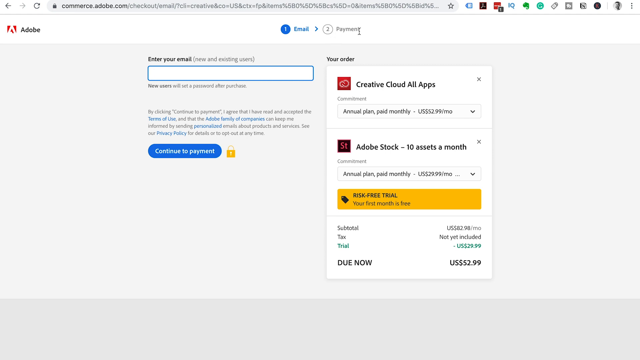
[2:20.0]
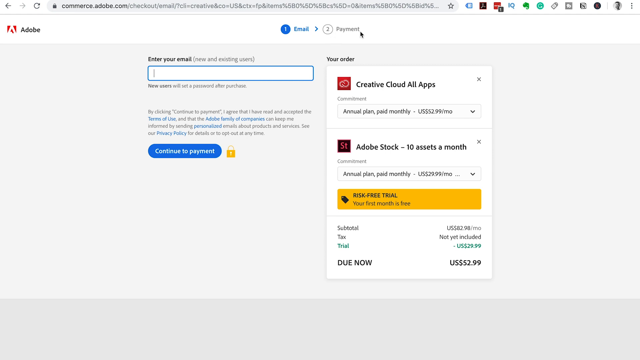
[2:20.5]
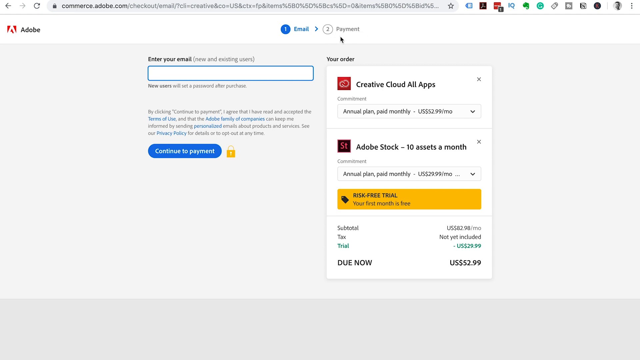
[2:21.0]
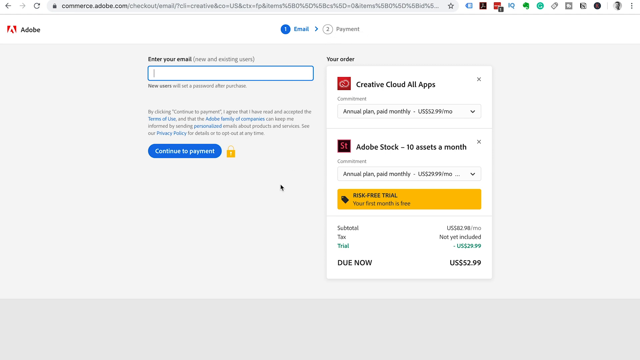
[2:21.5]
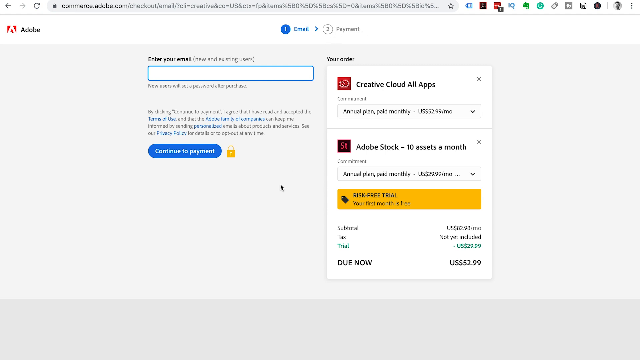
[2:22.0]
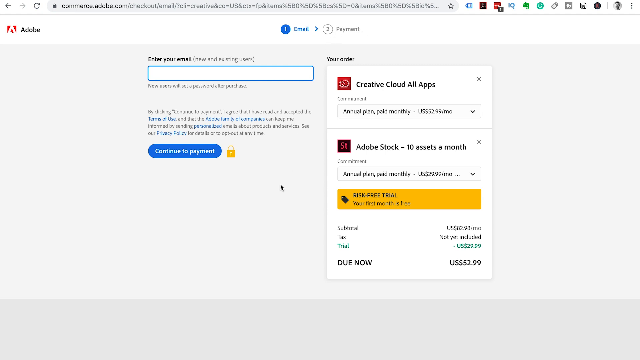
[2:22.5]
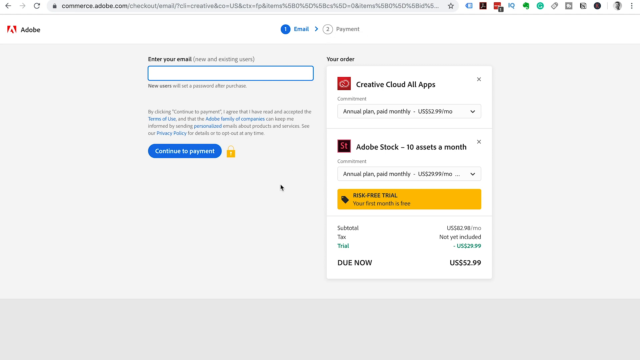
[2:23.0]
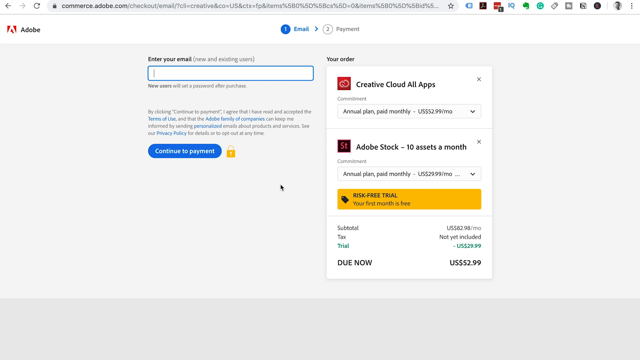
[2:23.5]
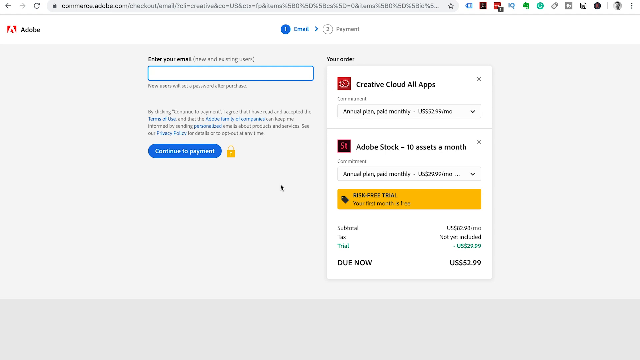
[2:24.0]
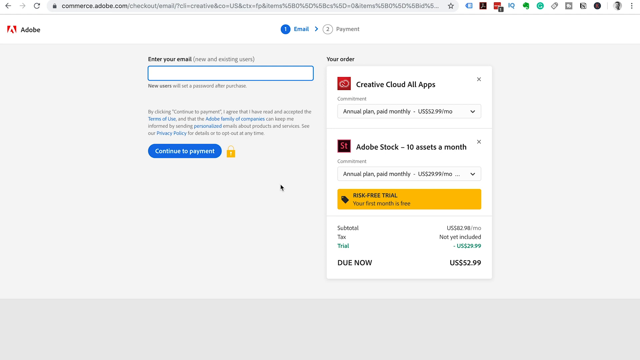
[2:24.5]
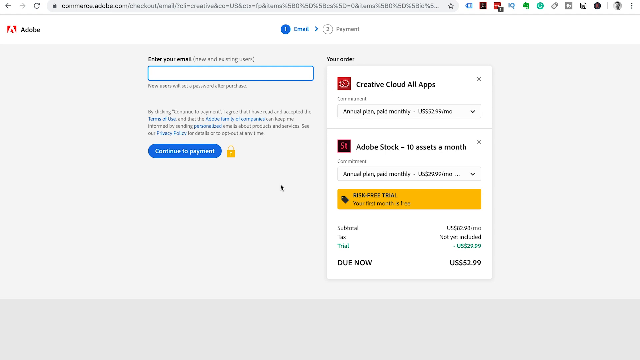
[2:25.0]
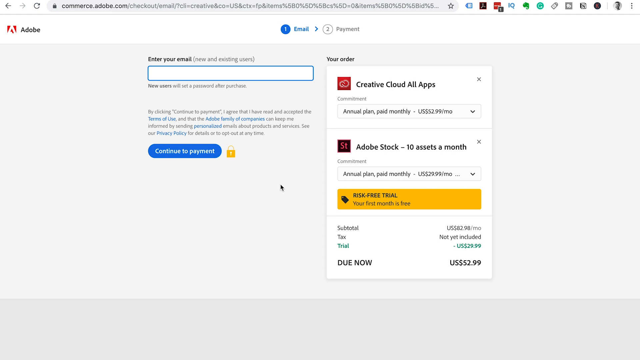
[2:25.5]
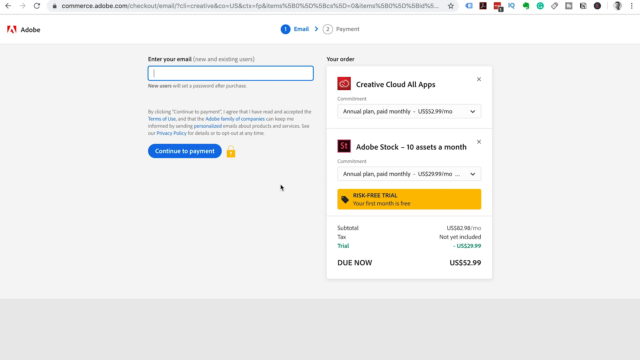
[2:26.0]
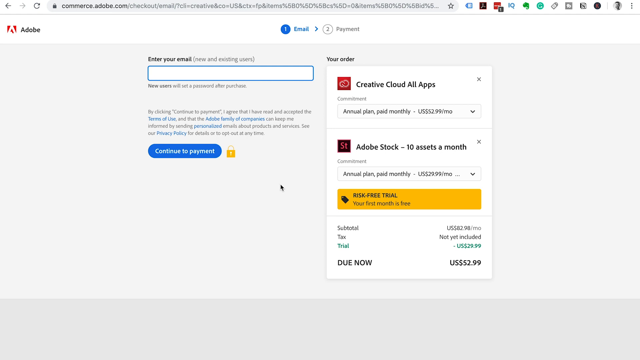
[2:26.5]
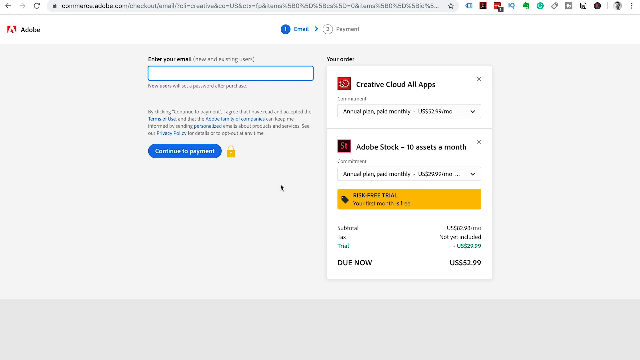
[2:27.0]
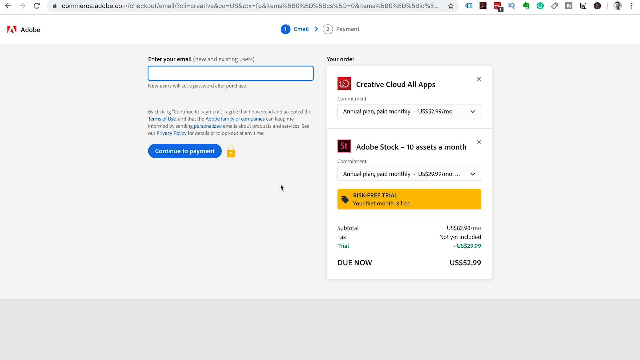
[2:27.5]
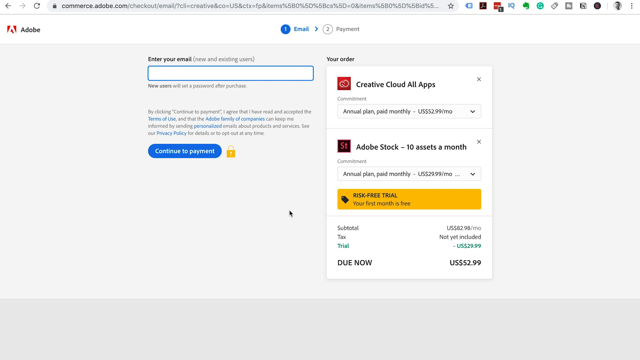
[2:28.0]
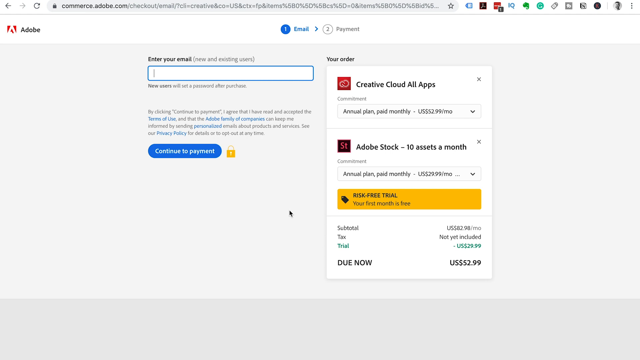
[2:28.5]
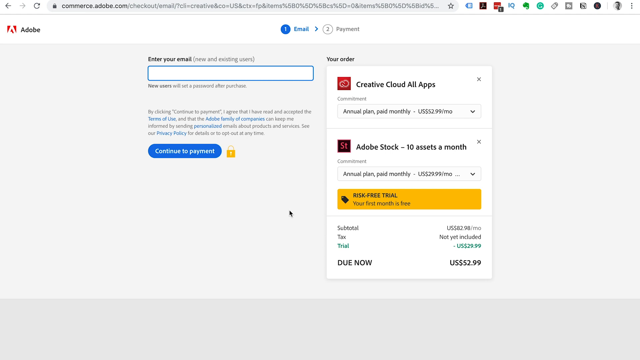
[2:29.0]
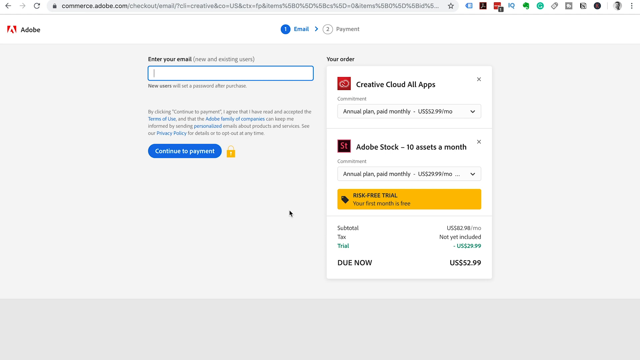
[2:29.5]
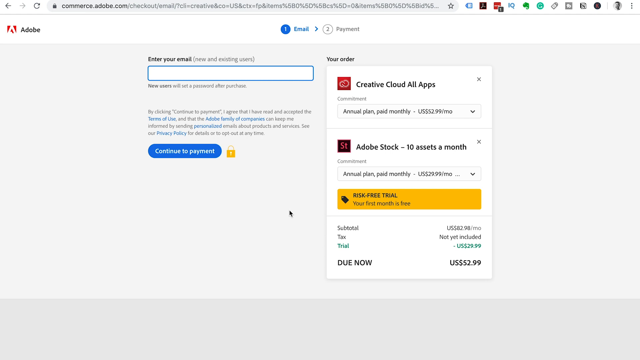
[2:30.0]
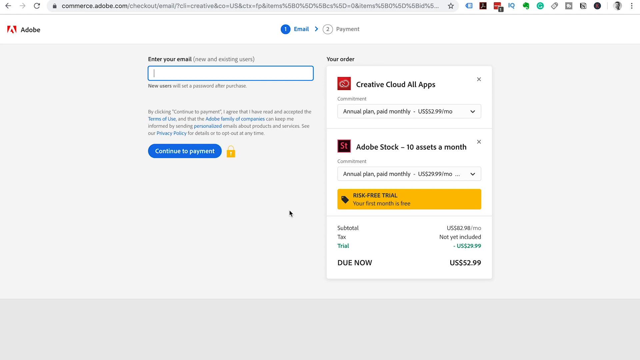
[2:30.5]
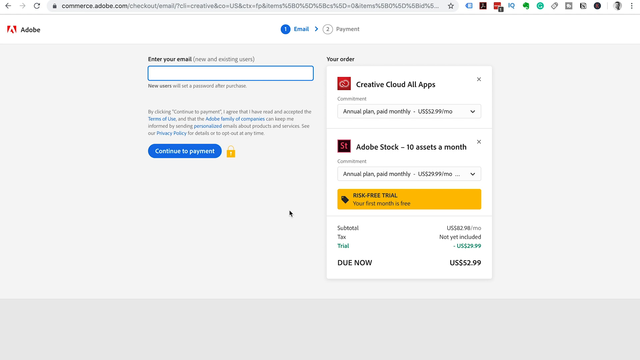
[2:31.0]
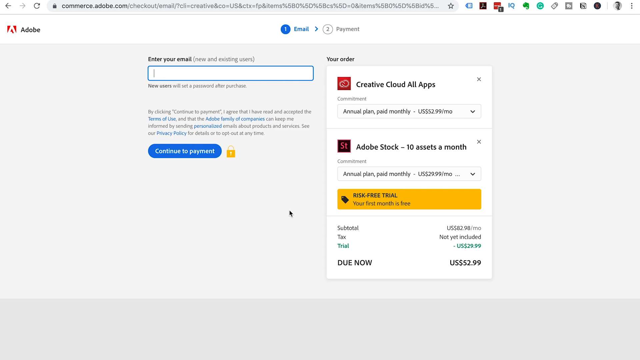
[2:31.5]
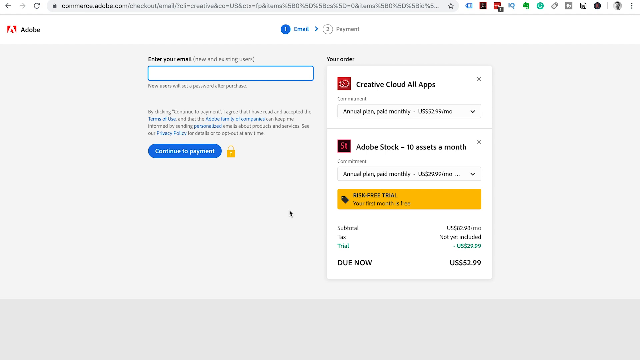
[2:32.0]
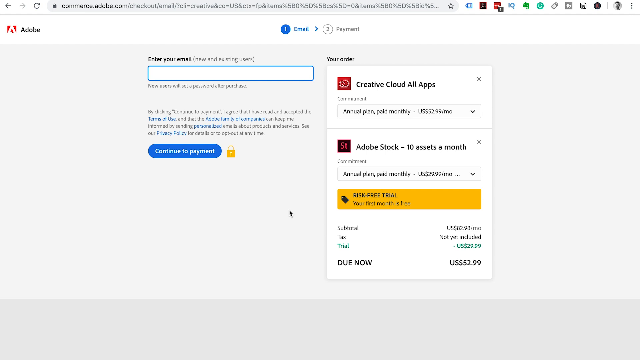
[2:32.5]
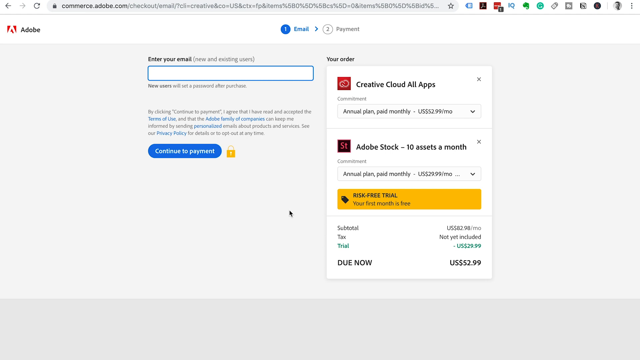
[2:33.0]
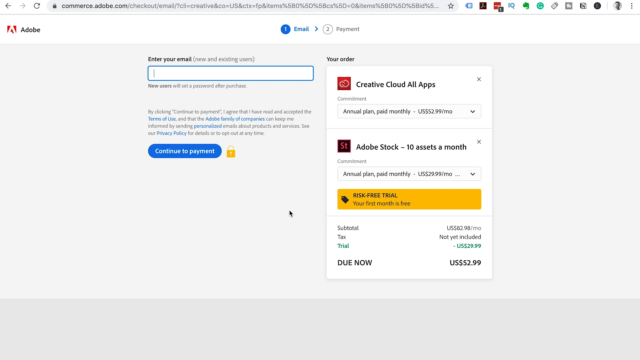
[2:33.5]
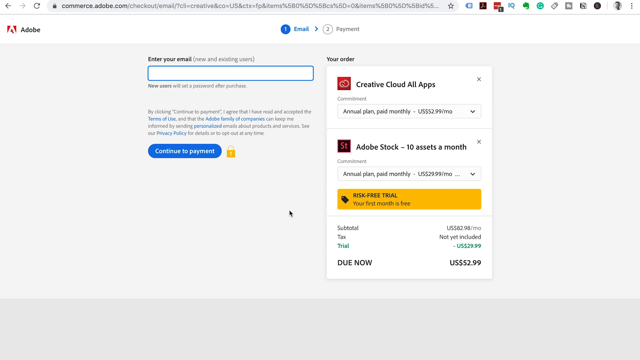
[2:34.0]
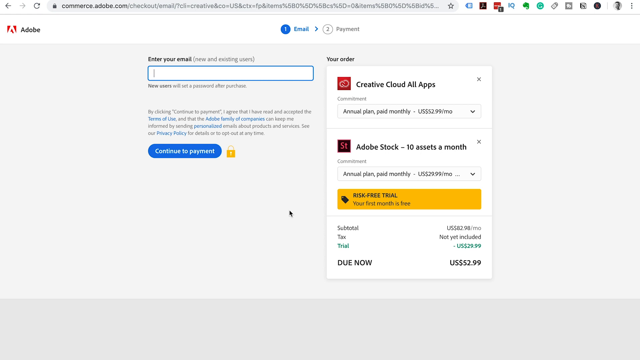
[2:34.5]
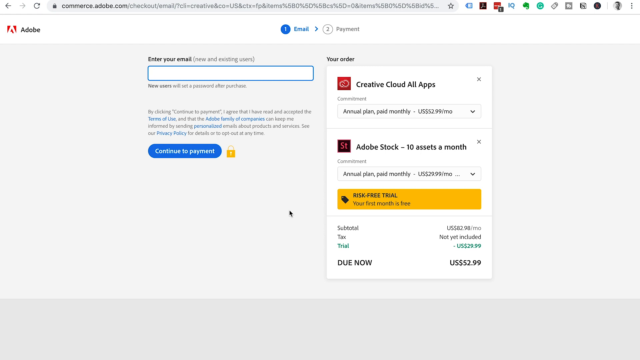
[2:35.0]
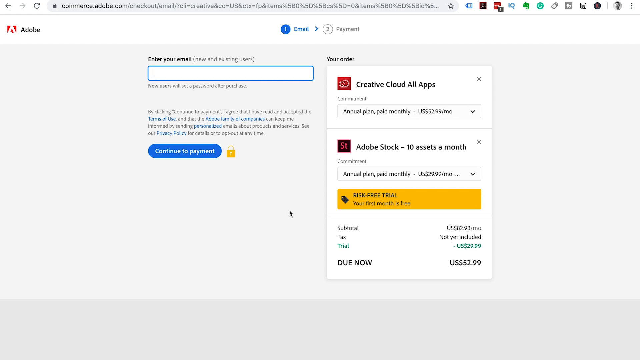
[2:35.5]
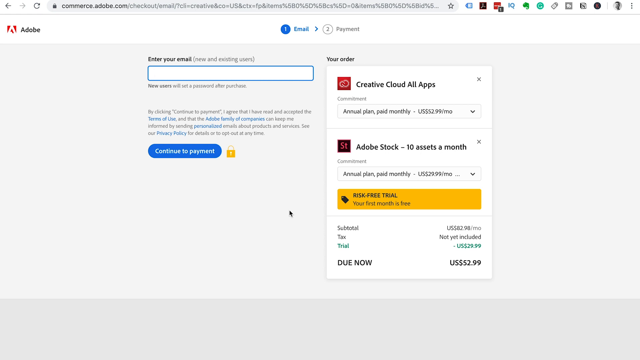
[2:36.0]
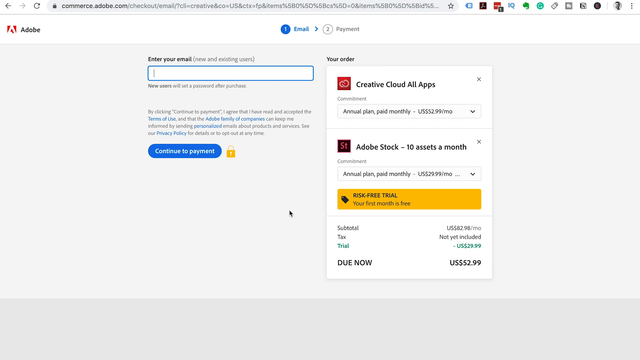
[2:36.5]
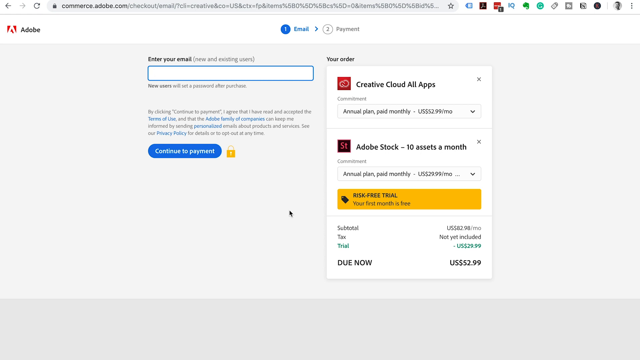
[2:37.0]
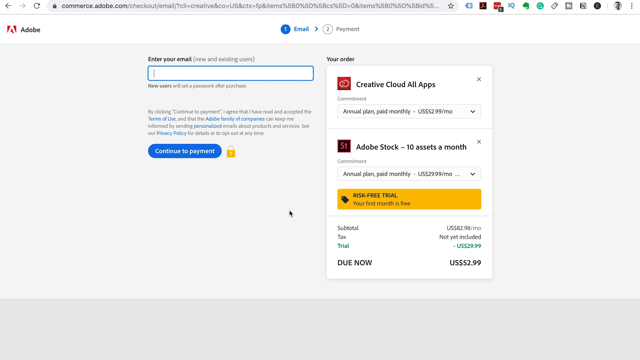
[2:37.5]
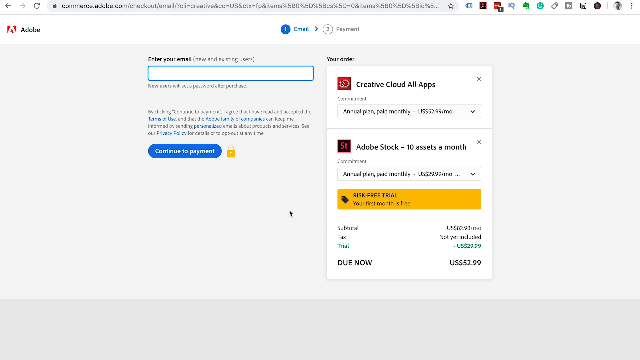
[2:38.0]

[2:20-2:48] The screen shows a space at the top left for entering an email; this seems to be the final page after selecting a product to buy. In the top center, the blue word "email" appears with the number one in a circle to its left; next to it, in light gray, is "payment," item number two. Under the email rectangle it says "new users will set a password after purchase." To the right it says "your order," with a white rectangle below reading "Creative Cloud, all apps," then "annual plans, paid monthly," with "US $52.99" to the right. Underneath is "Adobe Stock, 10 assets a month," then "annual plan paid monthly" at $29.99 a month. A bright yellow rectangle below the Adobe Stock option says "risk-free trial. Your first month is free." At the very bottom it says "due now, $52.99."